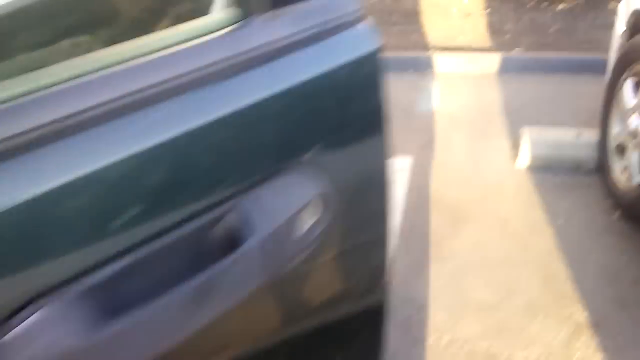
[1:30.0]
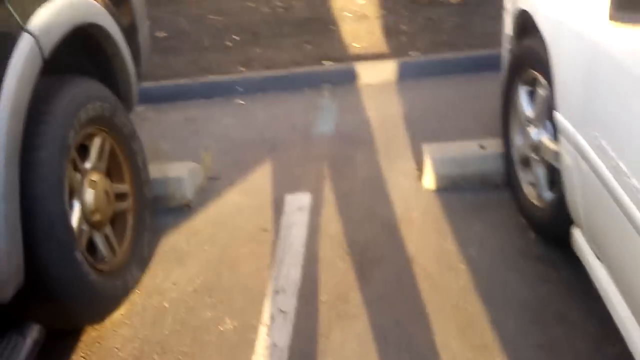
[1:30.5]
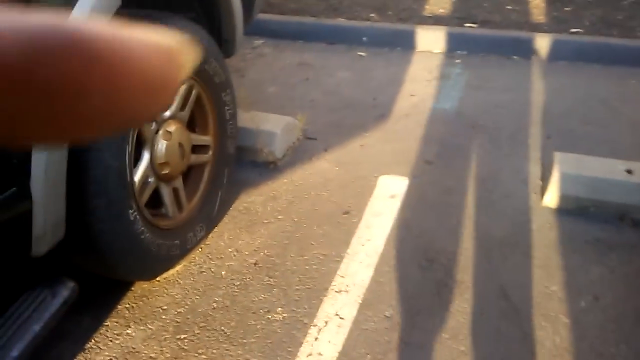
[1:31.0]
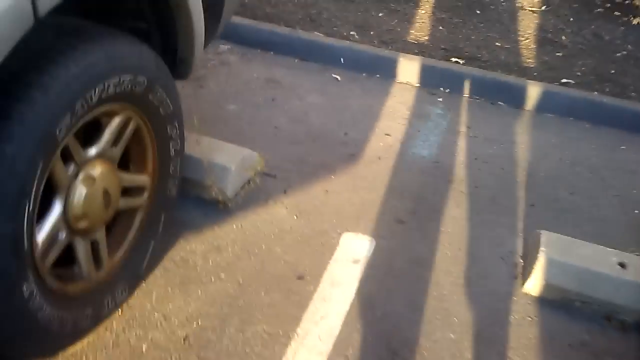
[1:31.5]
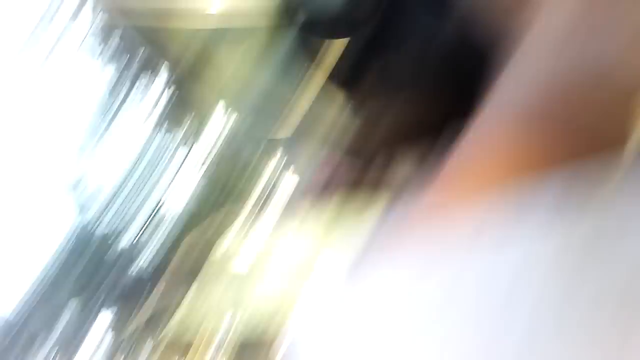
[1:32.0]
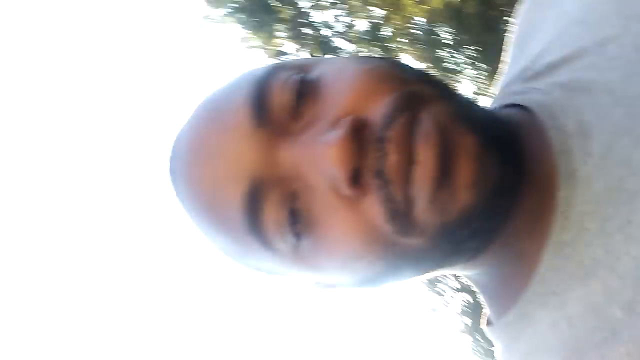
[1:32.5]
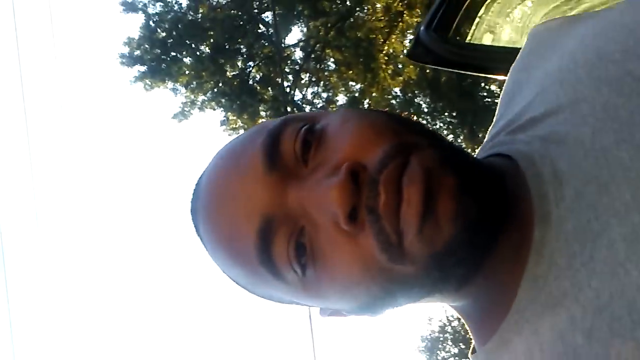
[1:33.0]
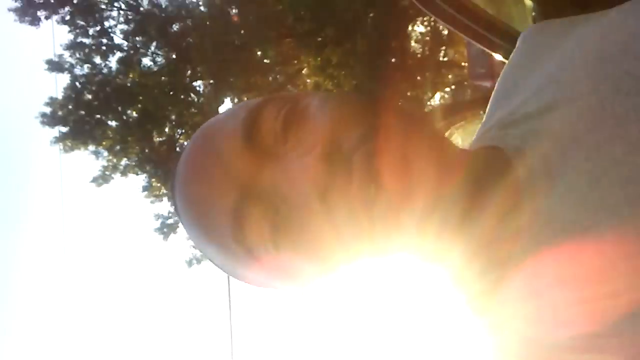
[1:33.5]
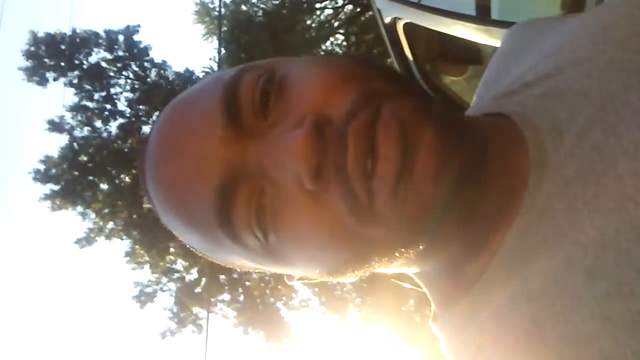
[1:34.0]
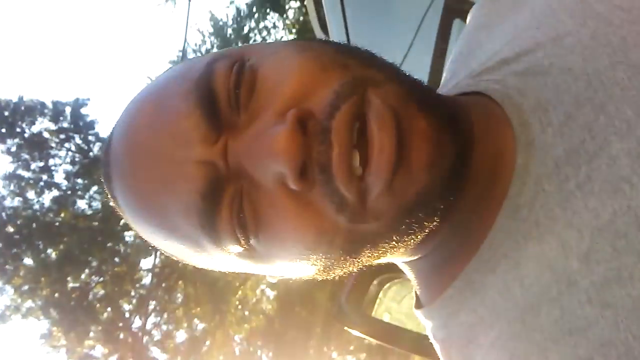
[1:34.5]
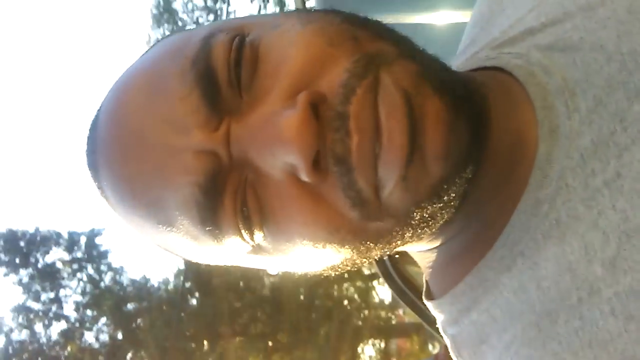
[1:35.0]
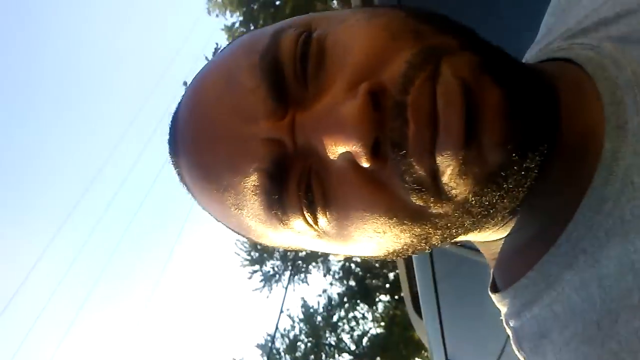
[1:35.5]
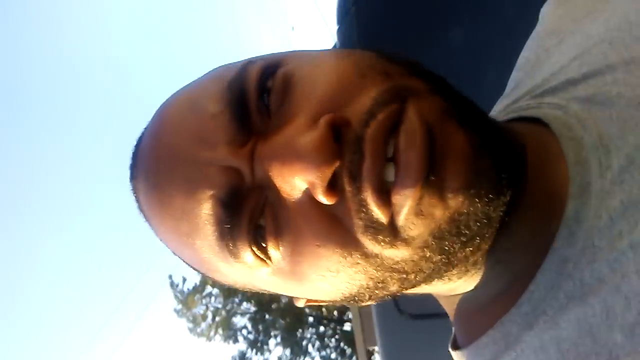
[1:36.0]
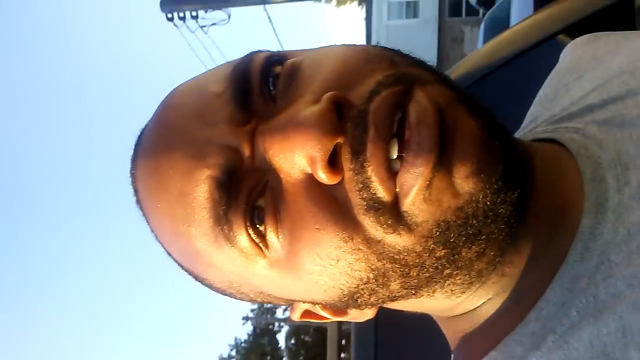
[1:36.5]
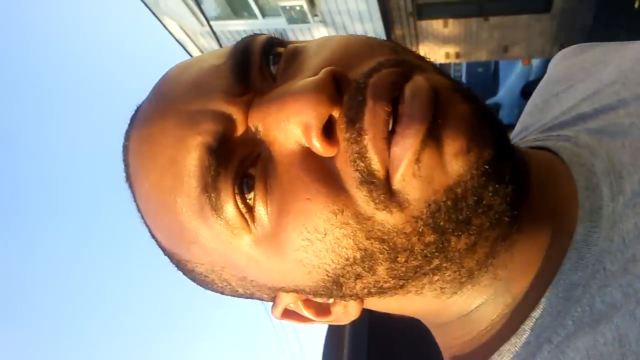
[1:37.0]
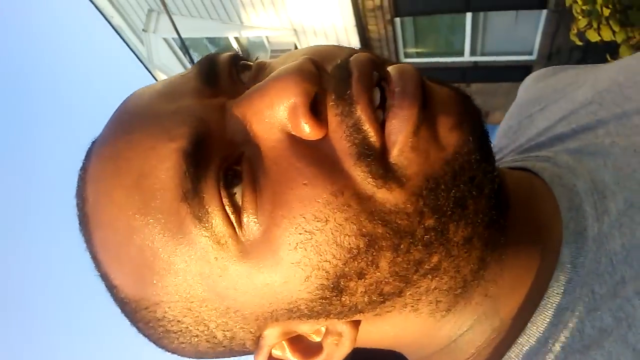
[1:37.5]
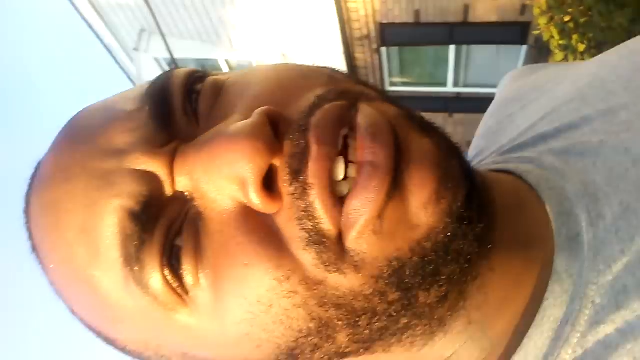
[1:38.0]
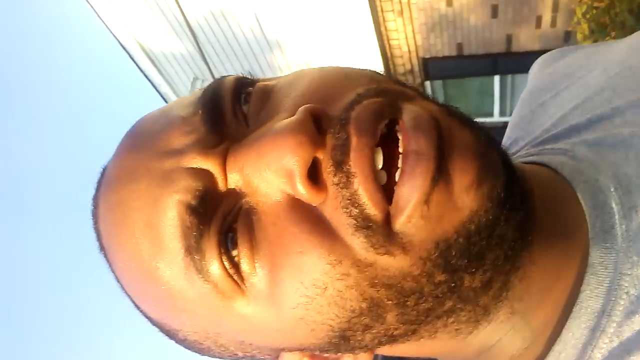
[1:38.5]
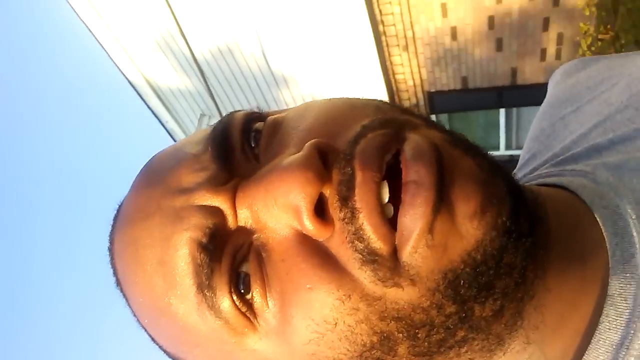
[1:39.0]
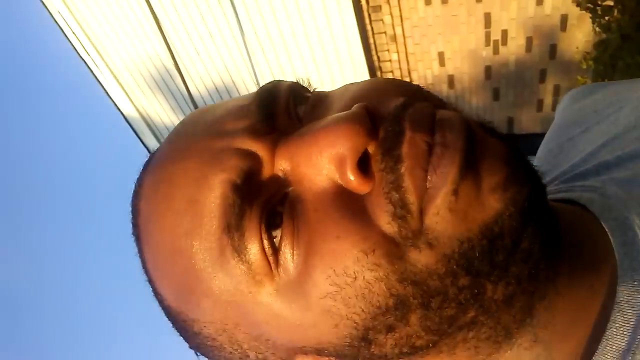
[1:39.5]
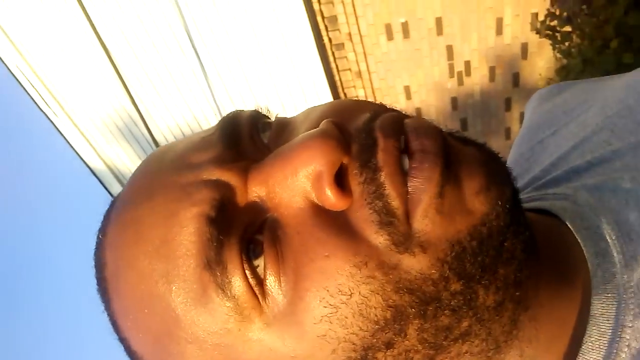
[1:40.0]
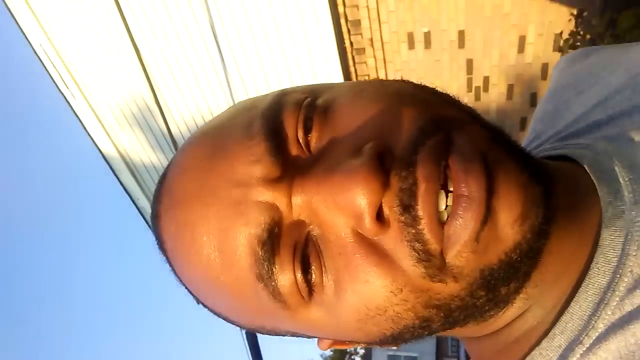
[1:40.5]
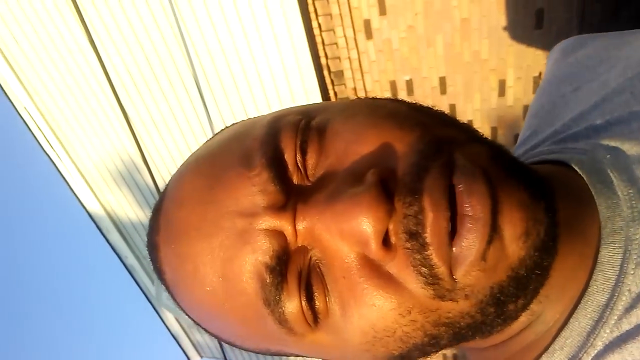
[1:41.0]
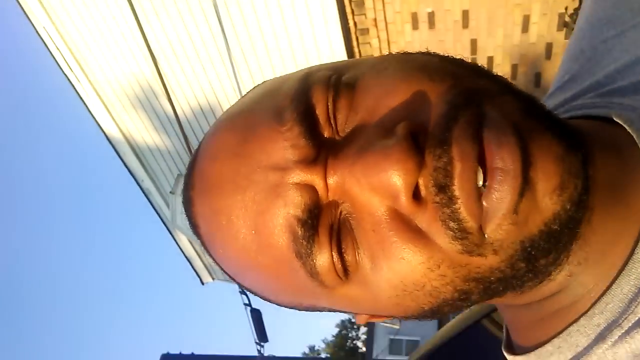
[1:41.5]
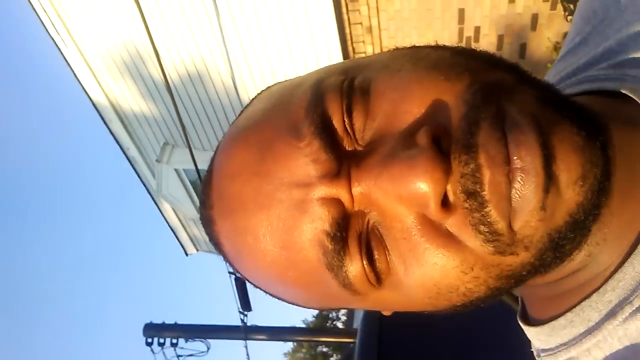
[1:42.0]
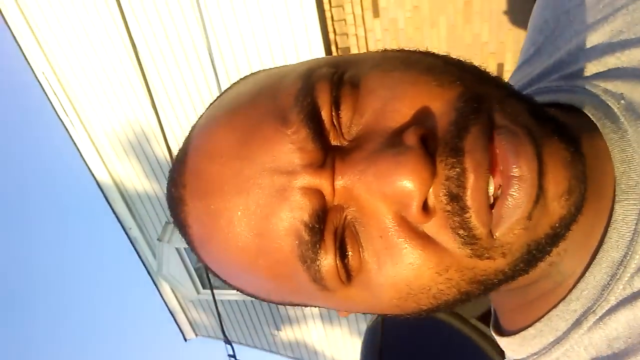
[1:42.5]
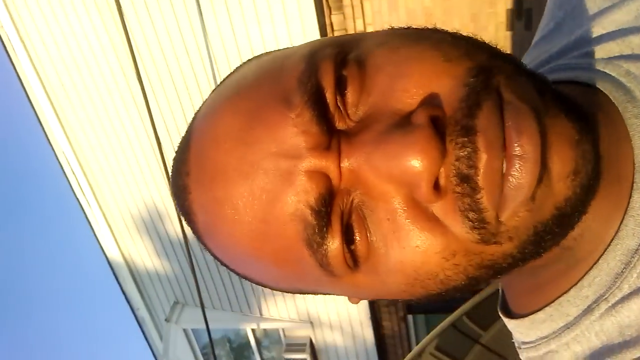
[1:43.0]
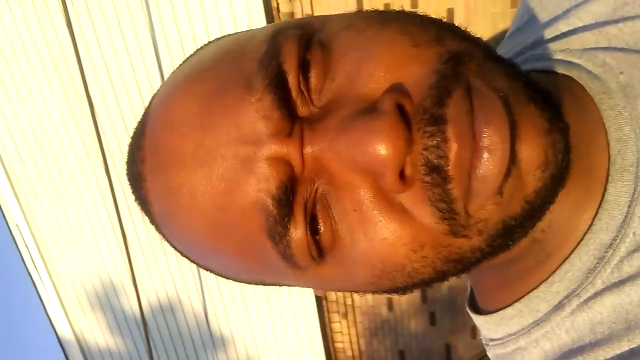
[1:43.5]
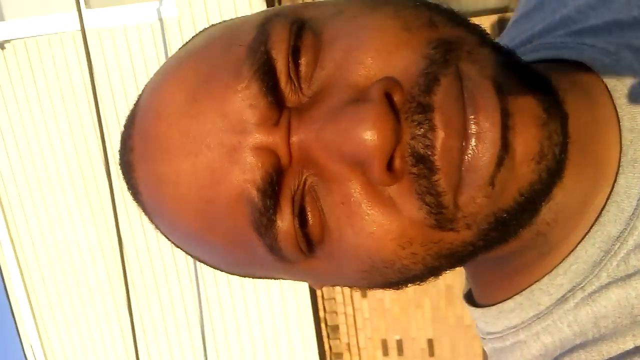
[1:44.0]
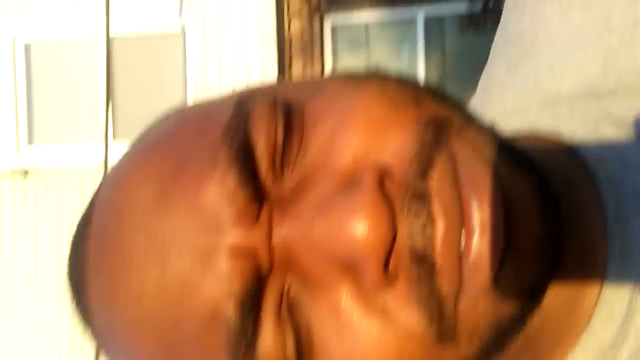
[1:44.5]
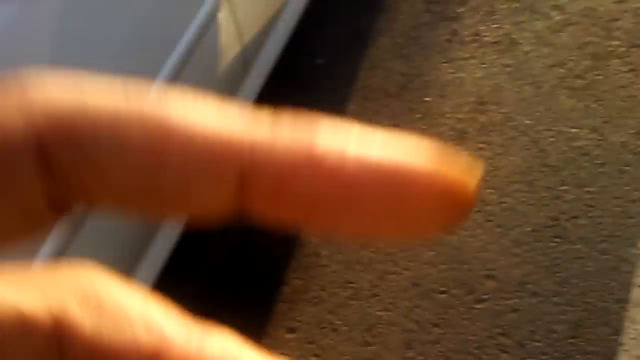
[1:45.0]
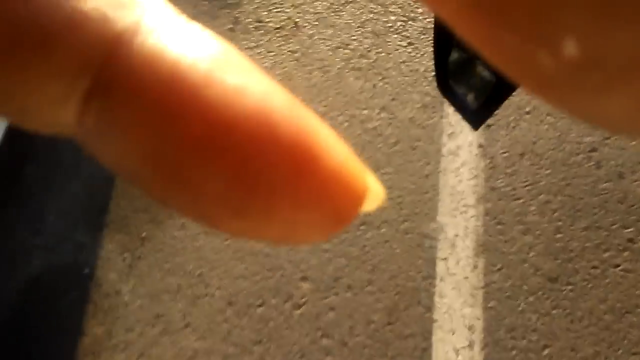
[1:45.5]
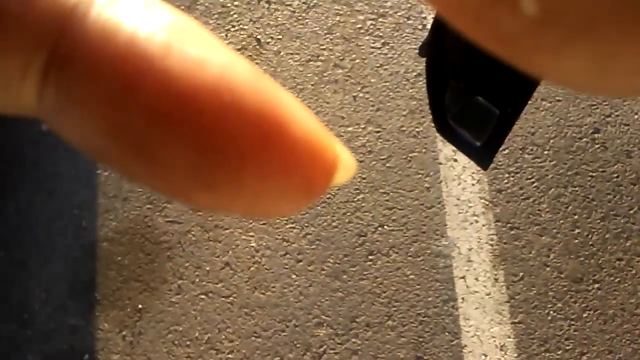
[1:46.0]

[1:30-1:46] A door handle of a car is shown; the car is a deep army green. The camera pans to the rear tire on the driver's side, and a person's finger briefly appears from the left side of the frame. The asphalt ground is visible, with a white line marking to the right of the tire. Shadows appear, and the camera pans upward to show the face of the person filming: a Black man with a mustache, wearing a gray t-shirt. He is filming sideways, so his head appears in a horizontal orientation. Sunshine shows behind him between the leaves of a tree in the background. He begins to speak, and it becomes visible that he has close-cropped hair rather than a bald head. He walks past the side of a building, showing a window and the brick wall, as he continues speaking. Then his finger points to an object.